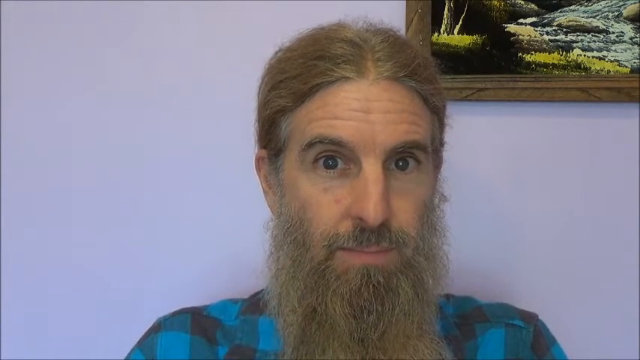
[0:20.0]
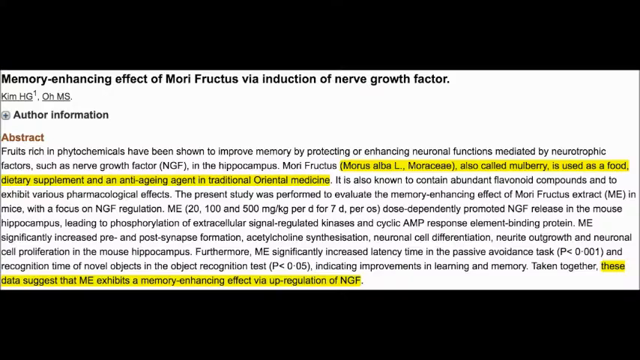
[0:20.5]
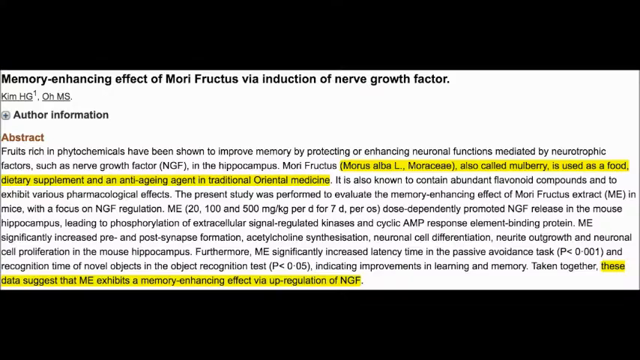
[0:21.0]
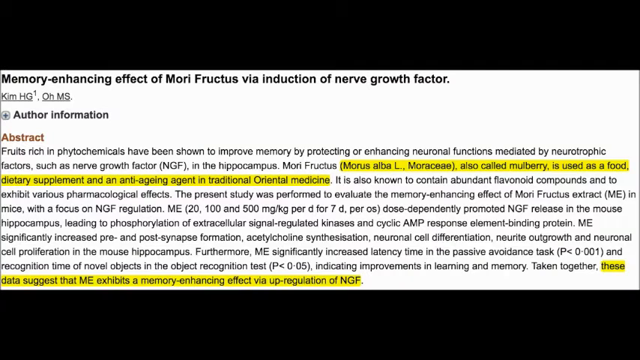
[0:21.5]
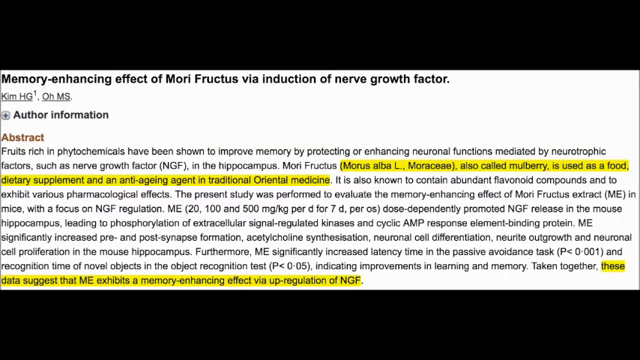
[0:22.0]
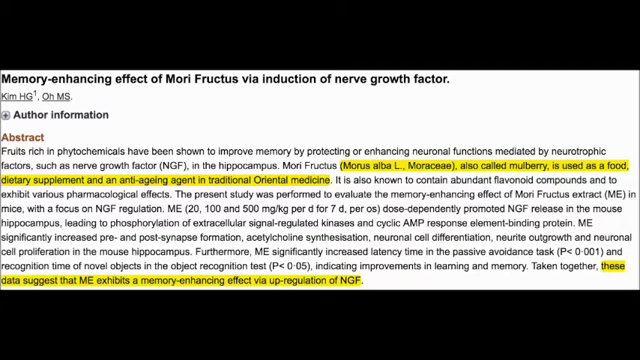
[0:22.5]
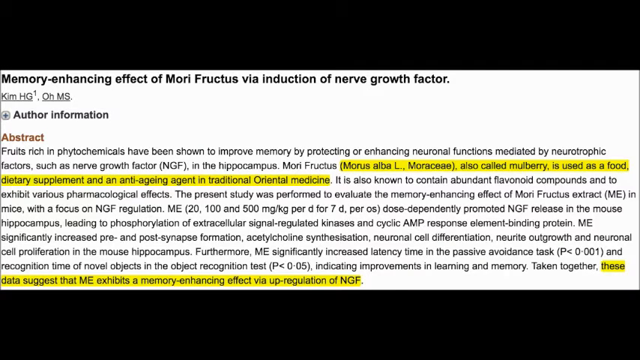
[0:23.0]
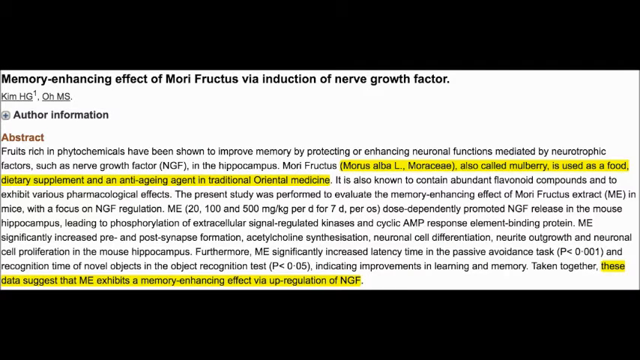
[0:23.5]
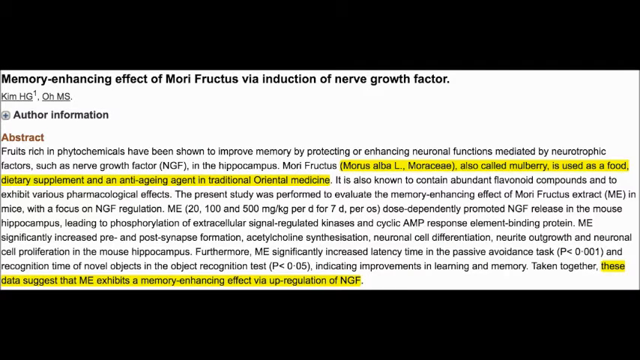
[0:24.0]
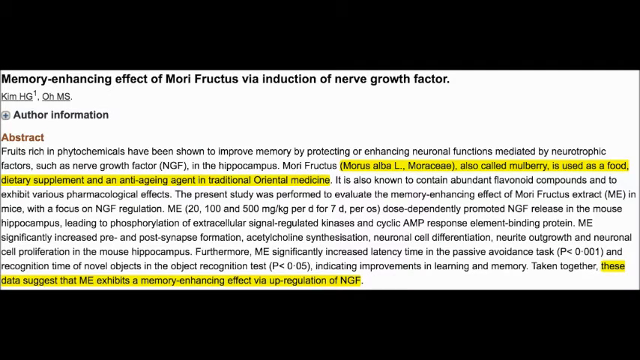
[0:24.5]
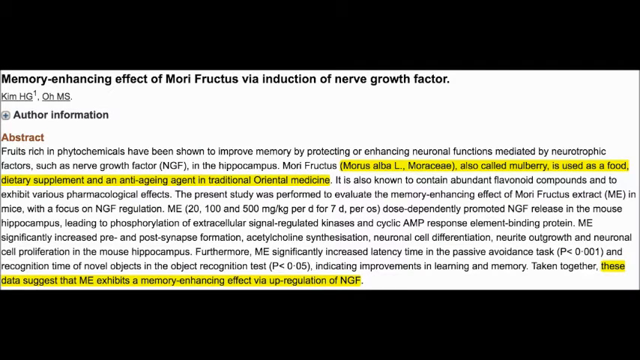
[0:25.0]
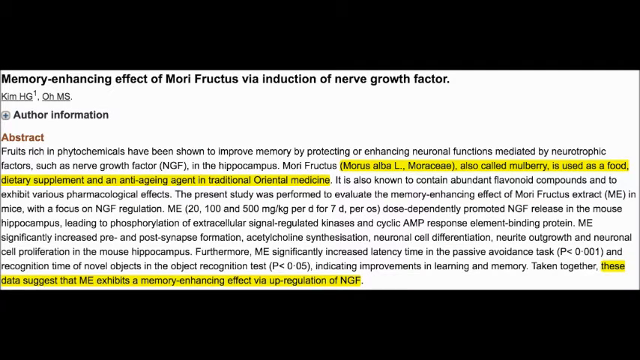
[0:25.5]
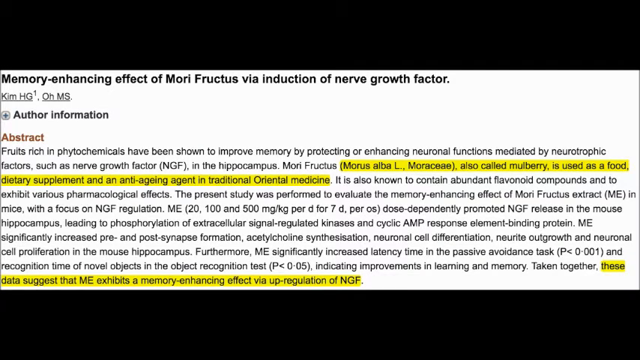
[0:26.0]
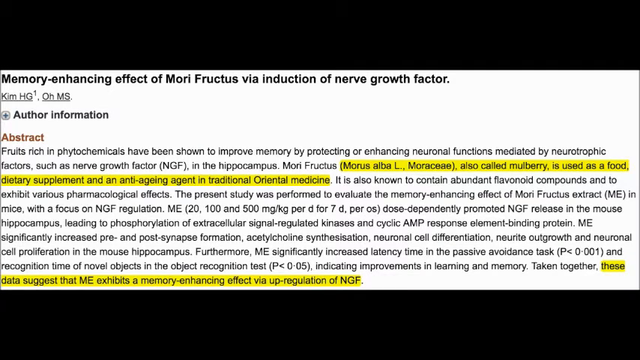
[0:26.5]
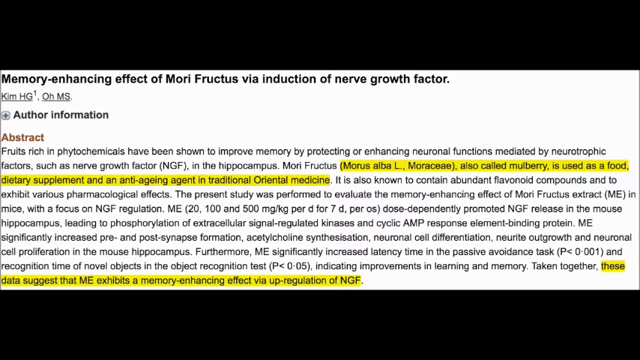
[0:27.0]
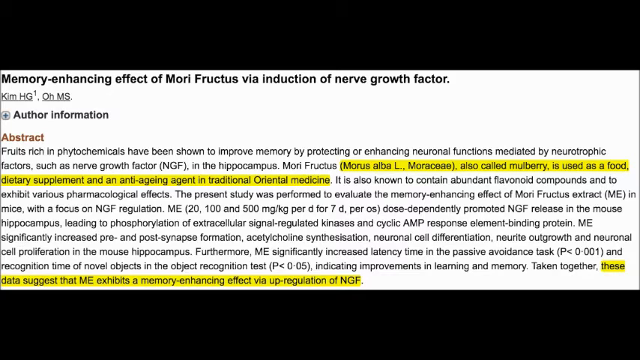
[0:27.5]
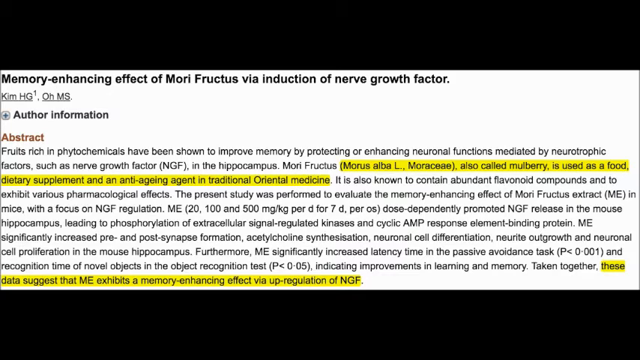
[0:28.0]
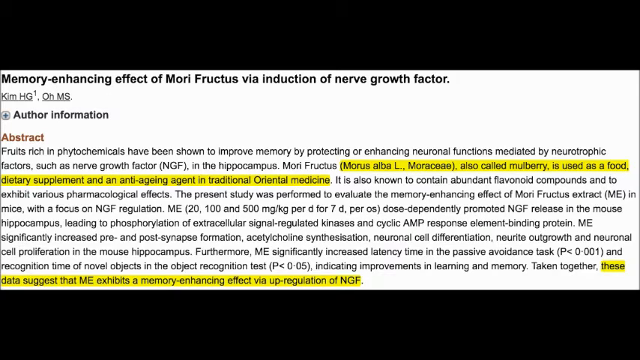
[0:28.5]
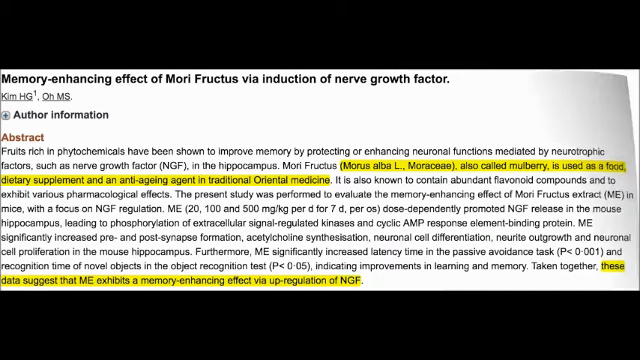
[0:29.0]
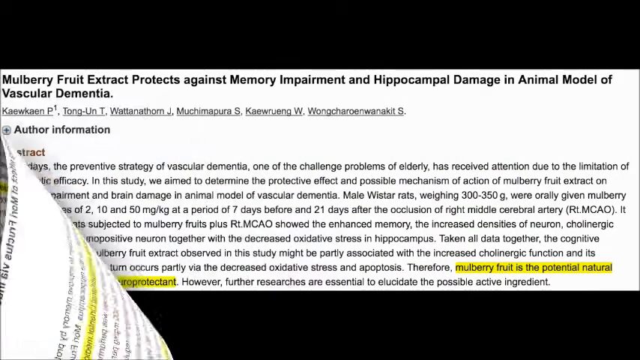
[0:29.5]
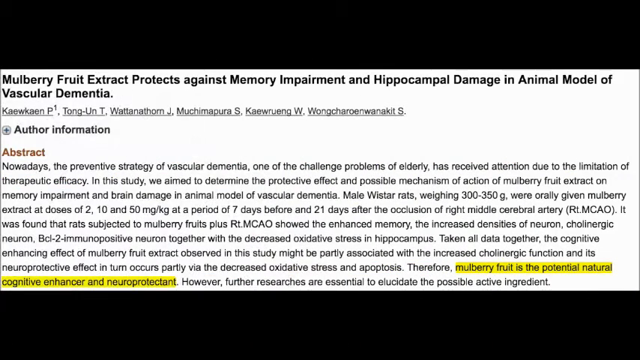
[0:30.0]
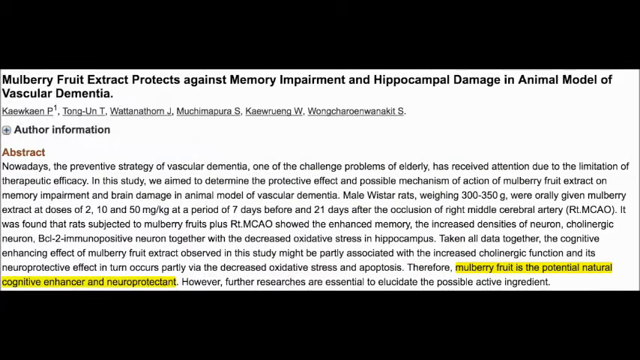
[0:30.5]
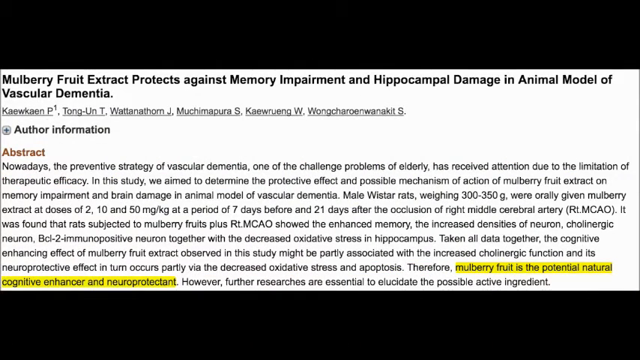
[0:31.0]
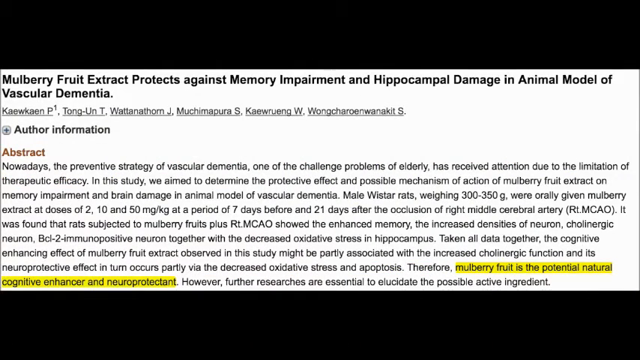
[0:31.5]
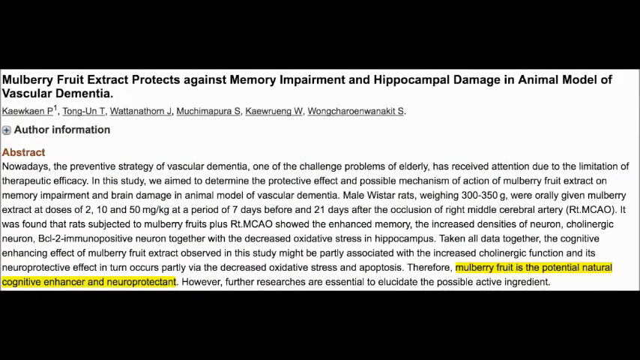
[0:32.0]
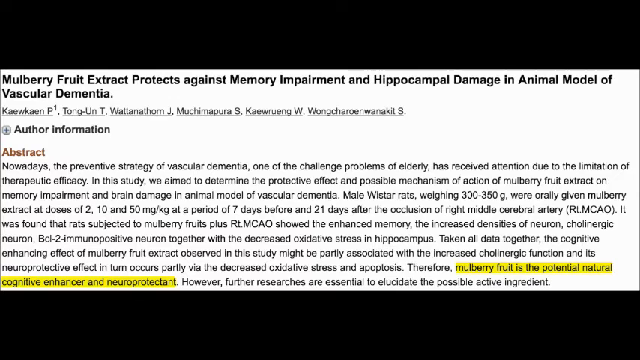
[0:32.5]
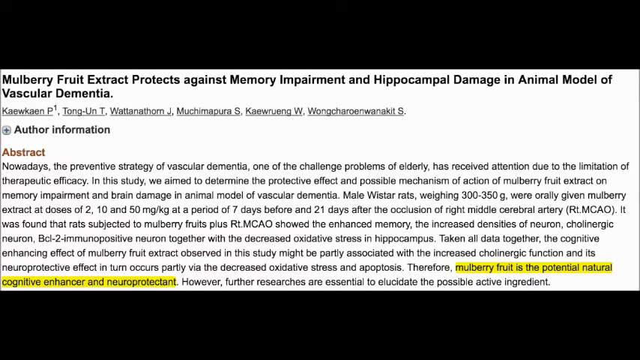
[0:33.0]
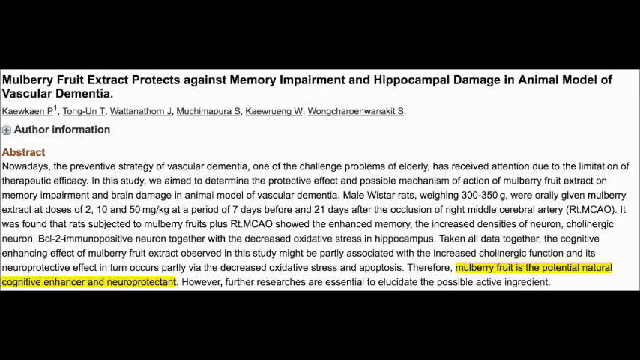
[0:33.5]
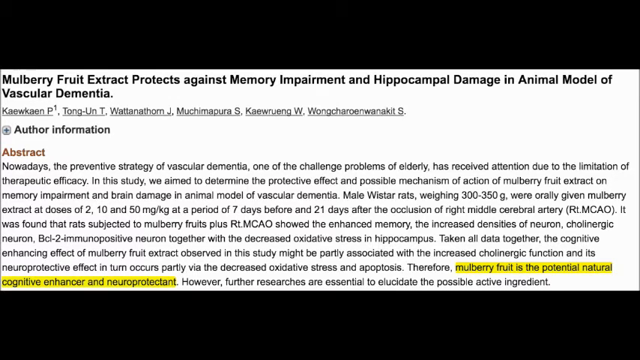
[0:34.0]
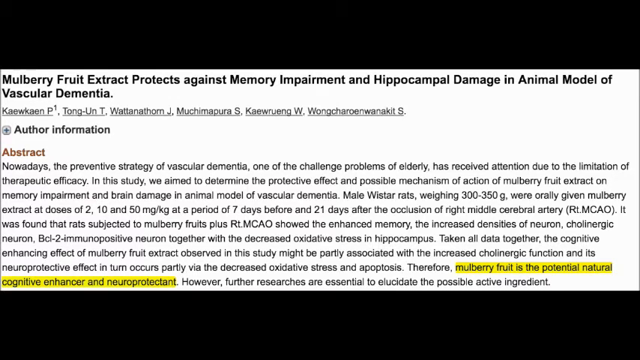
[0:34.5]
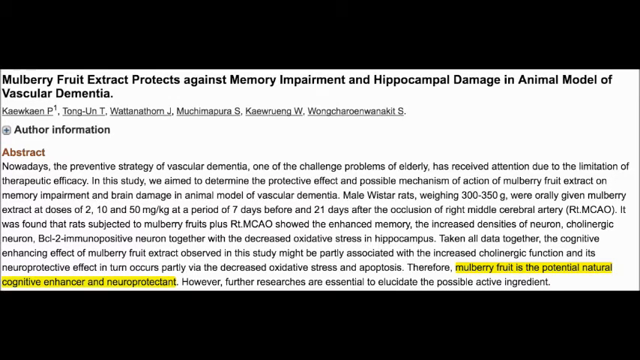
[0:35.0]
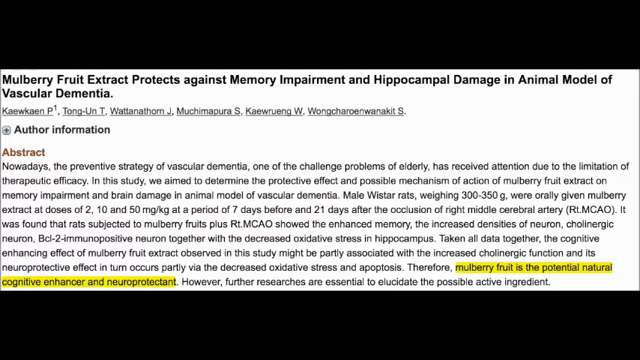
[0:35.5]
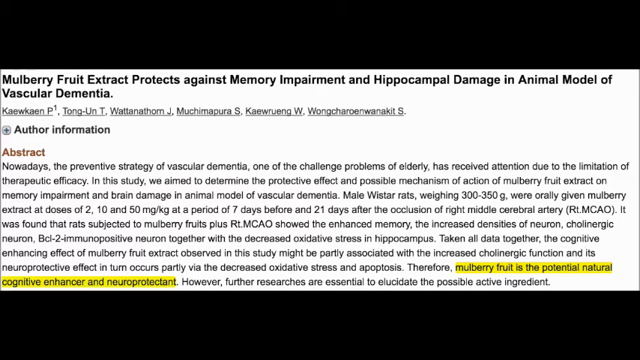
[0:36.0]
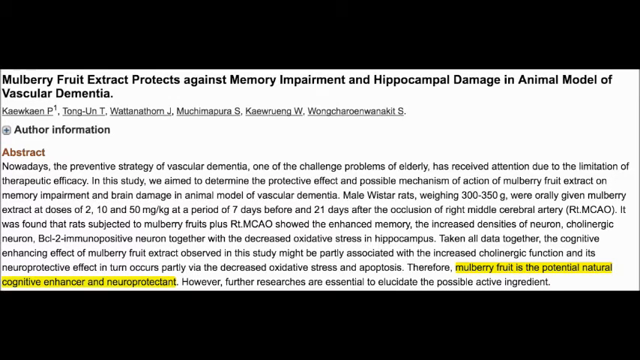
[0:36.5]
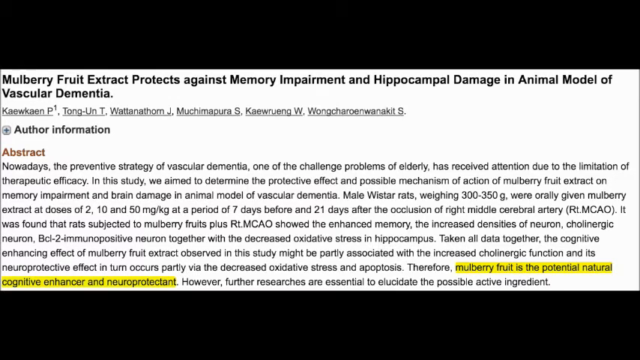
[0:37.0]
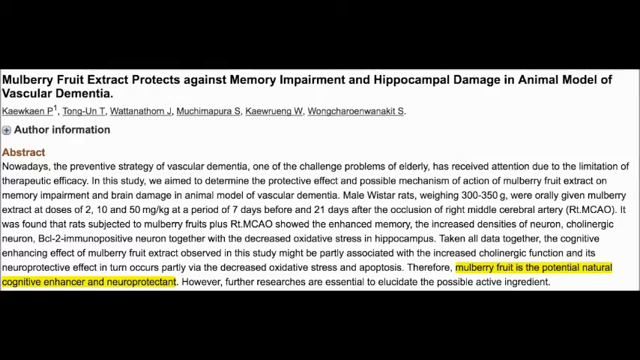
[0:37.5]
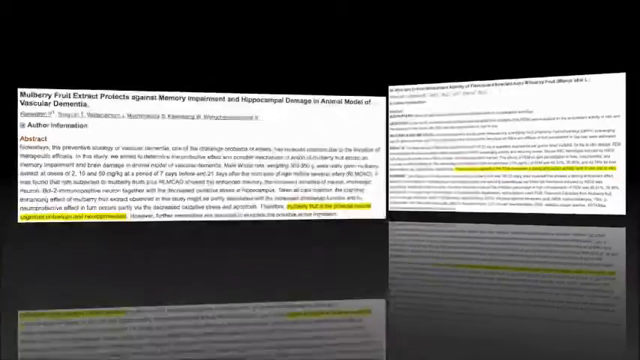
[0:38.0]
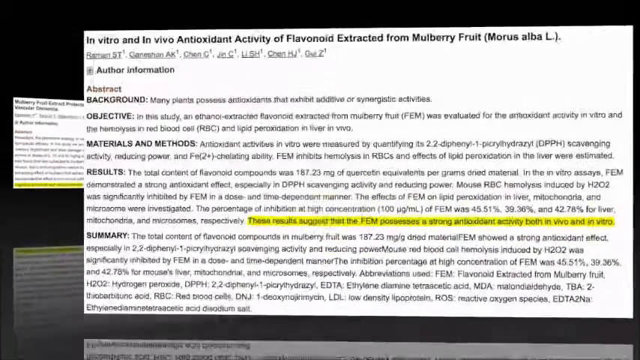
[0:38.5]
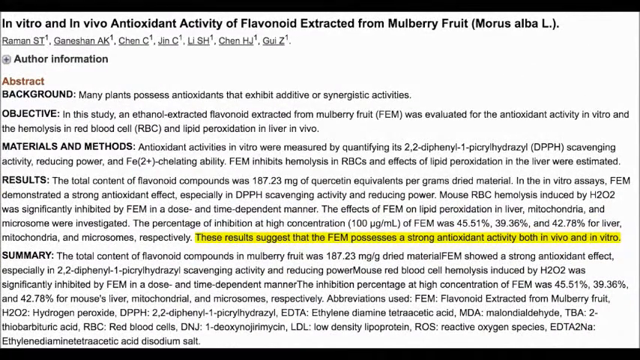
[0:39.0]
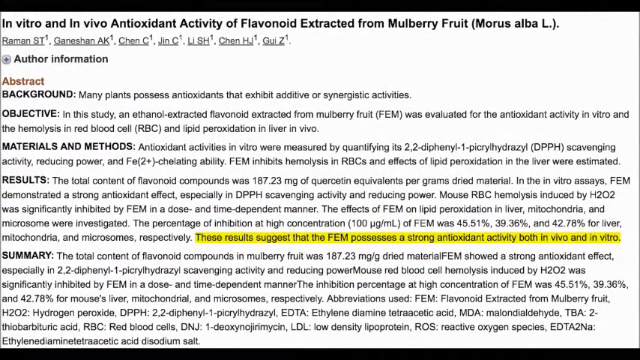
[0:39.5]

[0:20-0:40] A smiling man with long hair pulled back into a ponytail and a very full, long beard is in a room with something like a lavender wall. He looks very passionate as he talks to the viewer, his eyebrows repeatedly raising; he seems serious yet still somewhat happy. The video then shows what looks like an excerpt from a scientific article titled "Memory Enhancing Effect of Mori Fructus Via Induction of Nerve Growth Factor." The author information is shown, reading "Kim H.G." with a small 1 at the top, followed by "O.H.M.S." The abstract is displayed with some text highlighted: "Morris Alba, also called Mulberry, is used as a food dietary supplement and anti-aging agent in traditional oriental medicine," and "these data suggests that ME exhibits a memory enhancing effect via up-regulation of NGF."